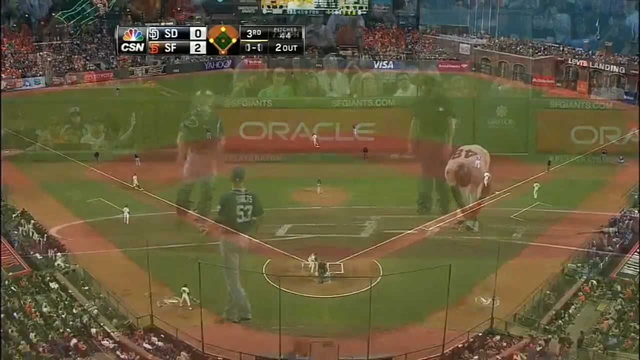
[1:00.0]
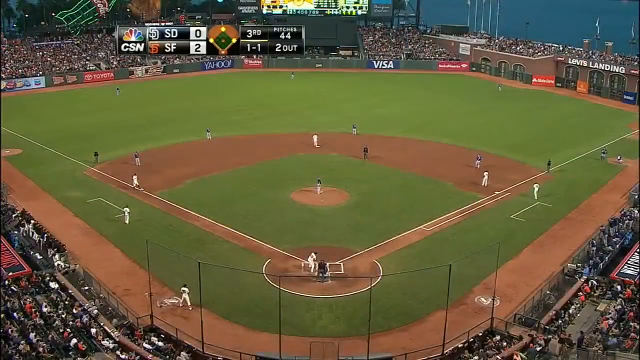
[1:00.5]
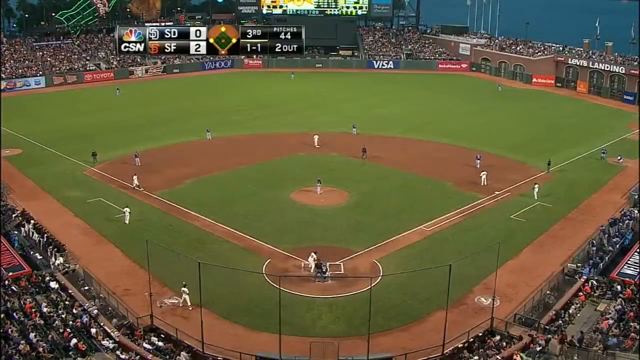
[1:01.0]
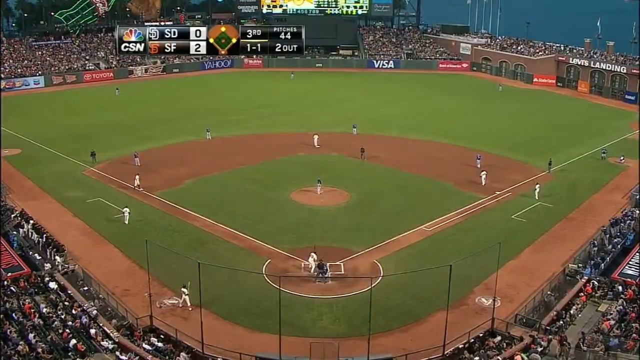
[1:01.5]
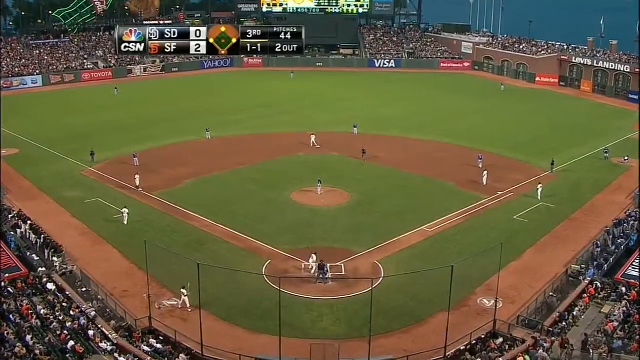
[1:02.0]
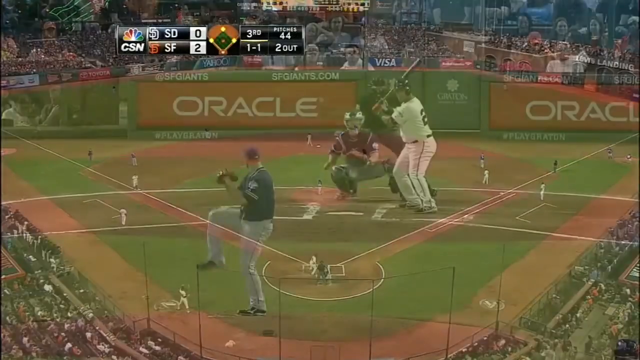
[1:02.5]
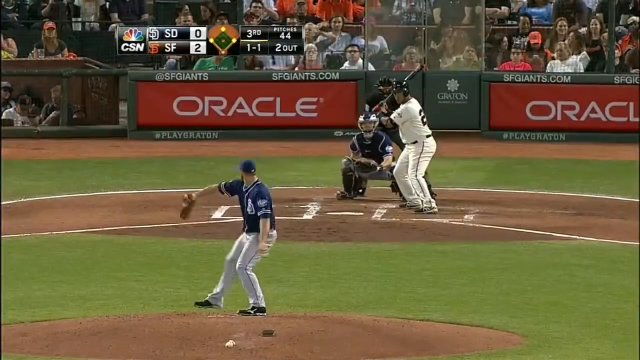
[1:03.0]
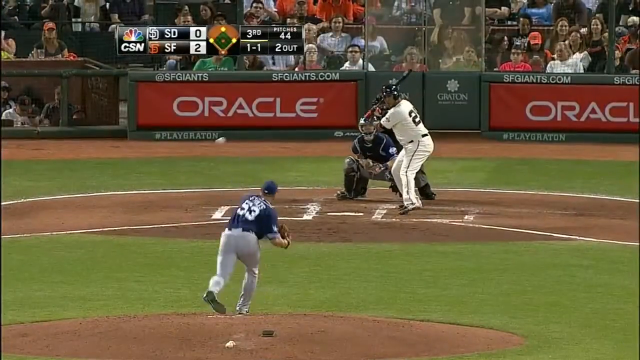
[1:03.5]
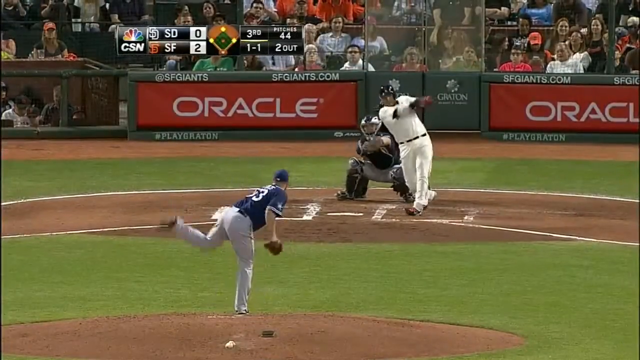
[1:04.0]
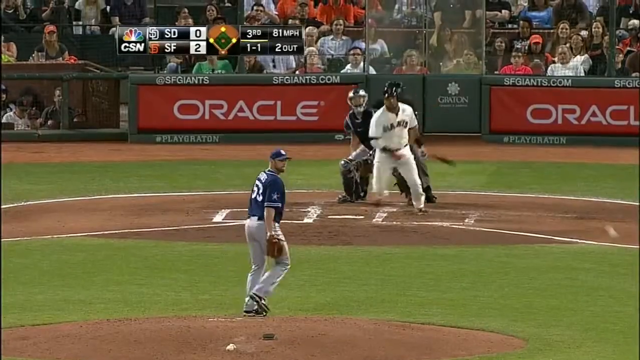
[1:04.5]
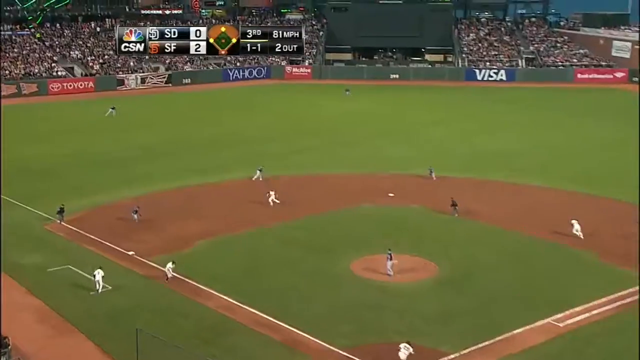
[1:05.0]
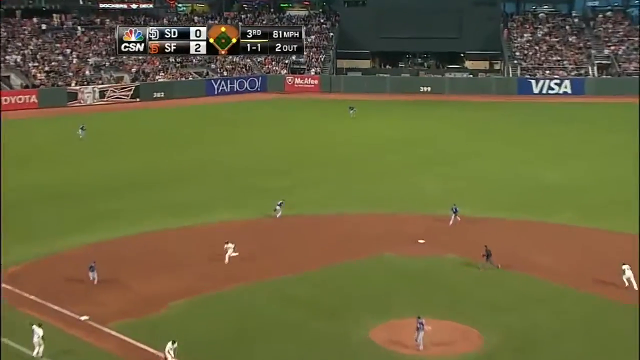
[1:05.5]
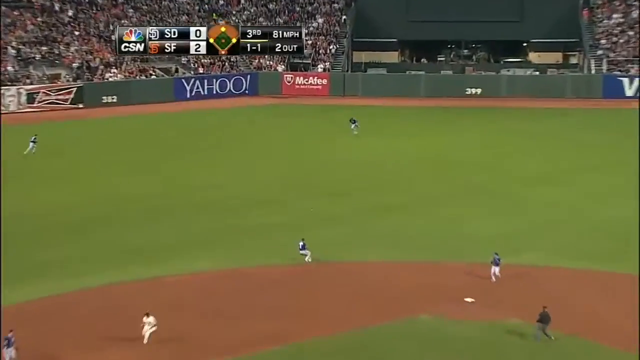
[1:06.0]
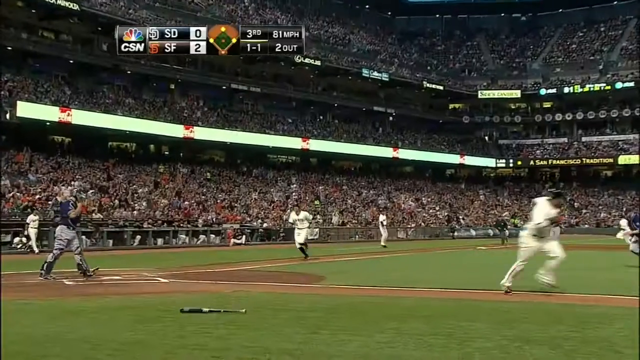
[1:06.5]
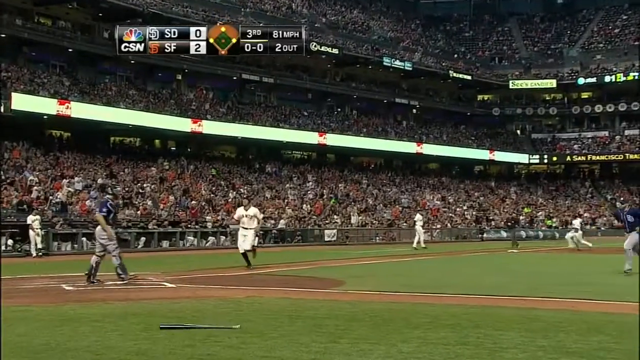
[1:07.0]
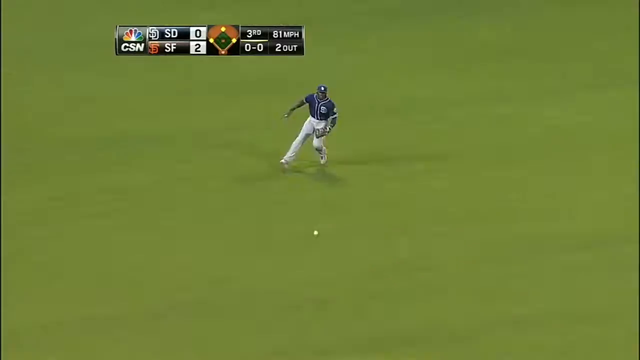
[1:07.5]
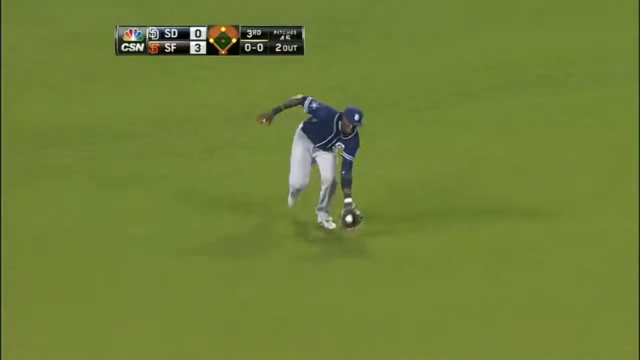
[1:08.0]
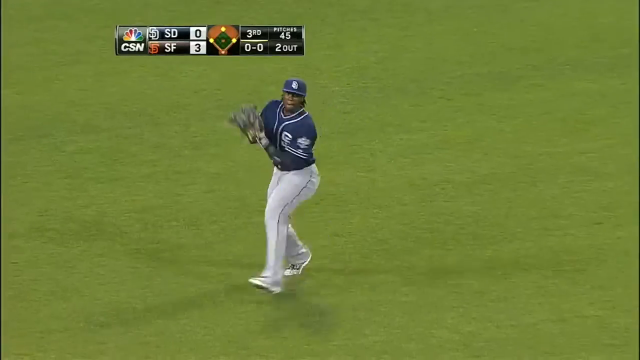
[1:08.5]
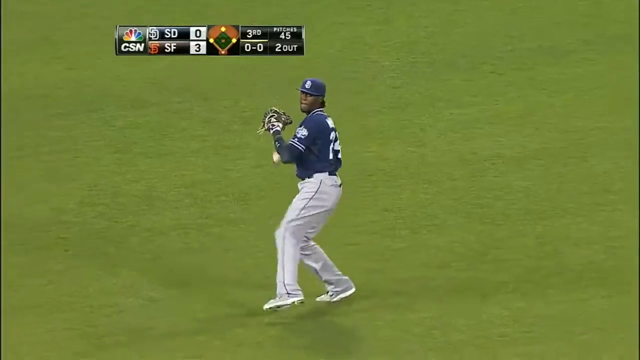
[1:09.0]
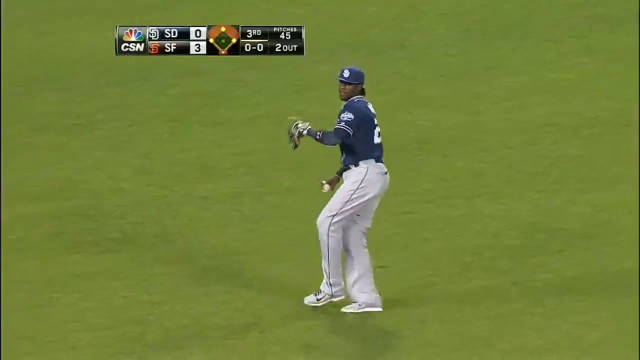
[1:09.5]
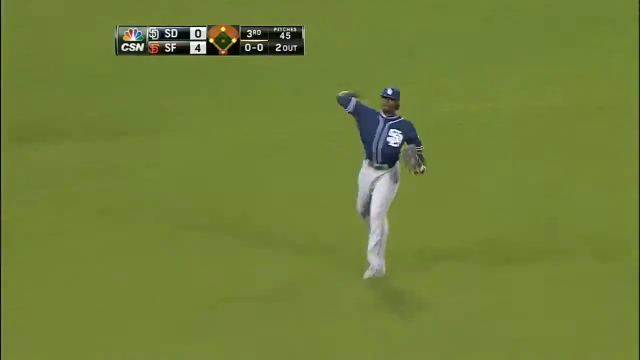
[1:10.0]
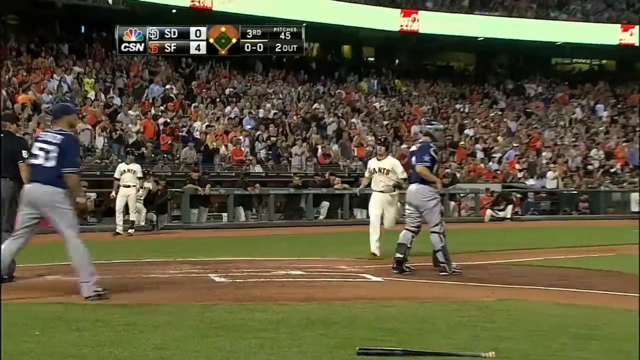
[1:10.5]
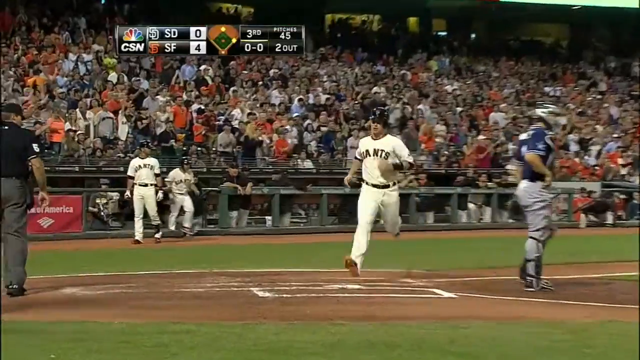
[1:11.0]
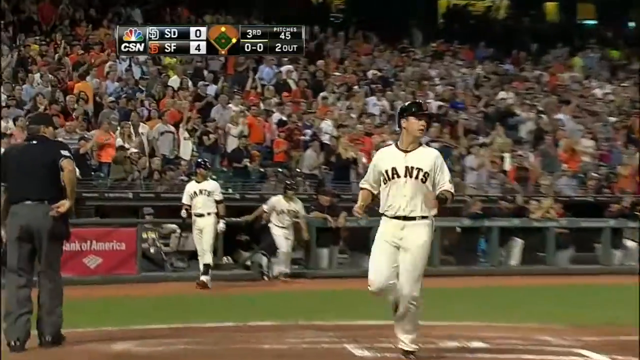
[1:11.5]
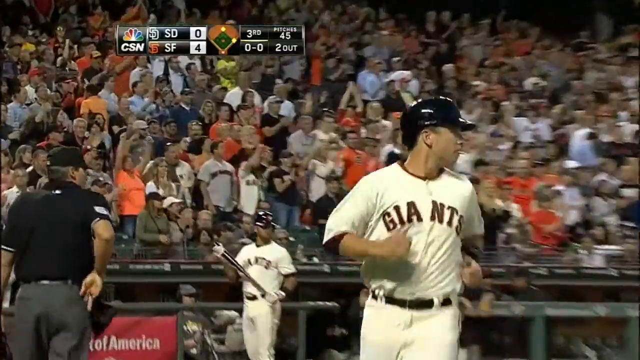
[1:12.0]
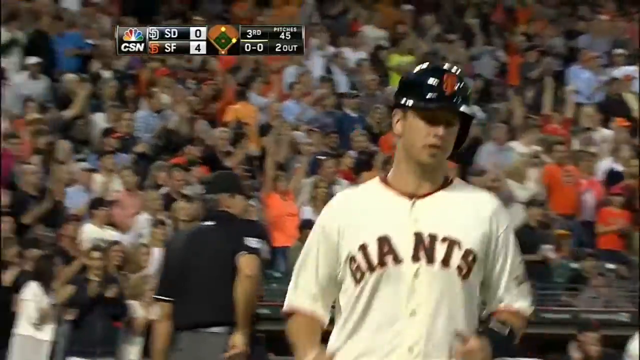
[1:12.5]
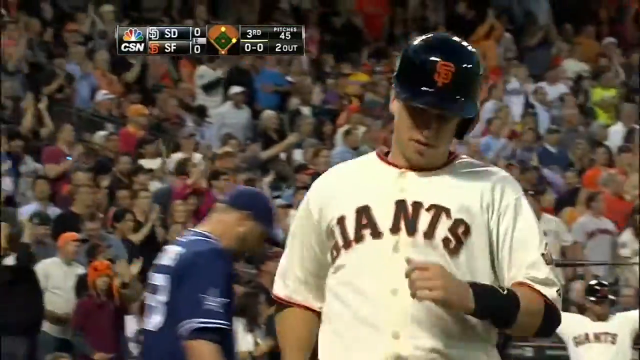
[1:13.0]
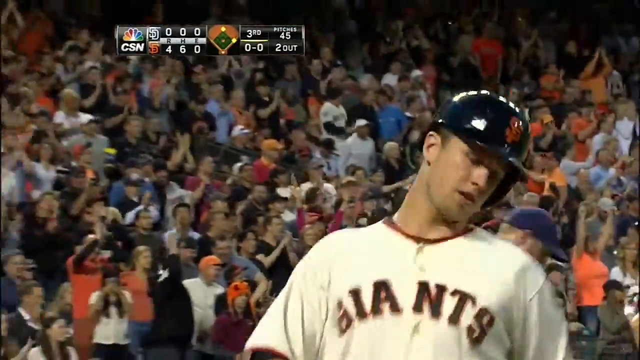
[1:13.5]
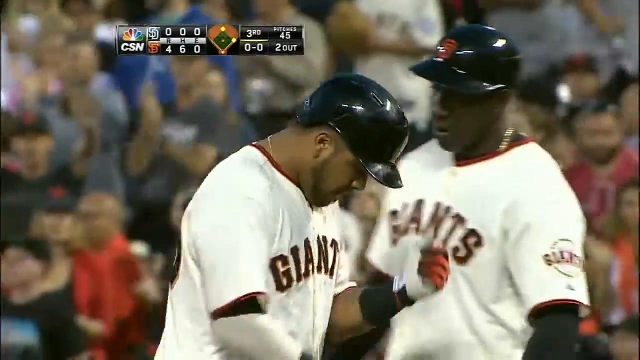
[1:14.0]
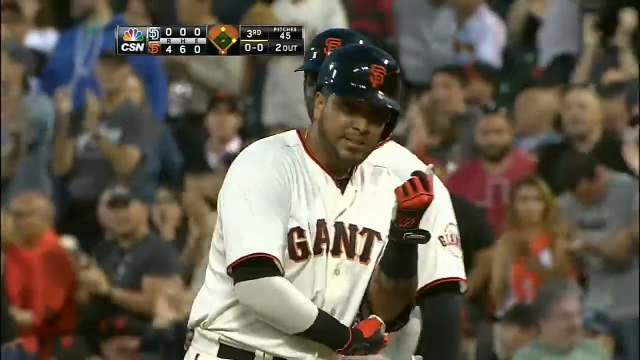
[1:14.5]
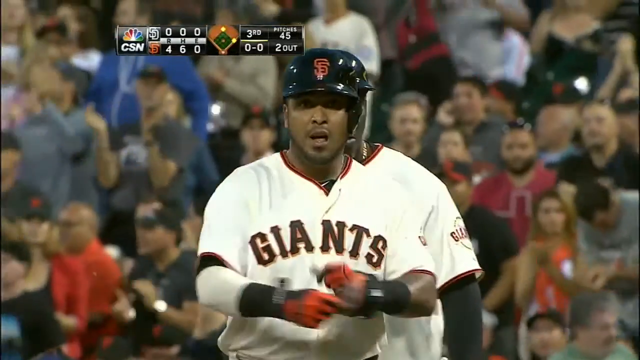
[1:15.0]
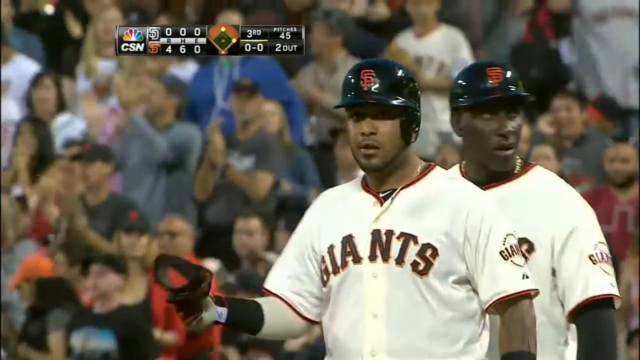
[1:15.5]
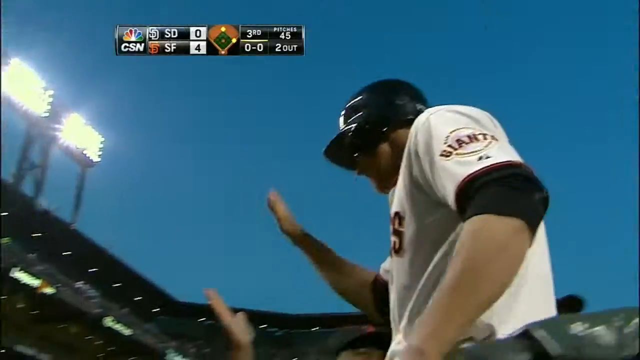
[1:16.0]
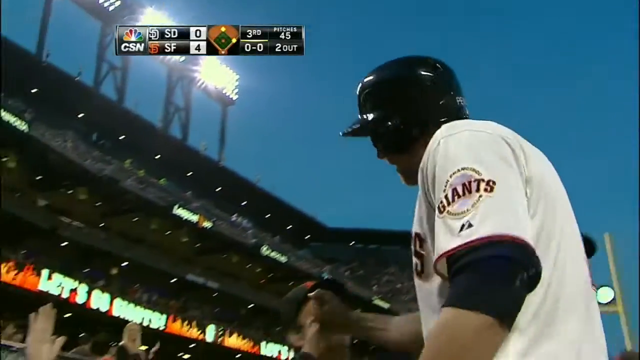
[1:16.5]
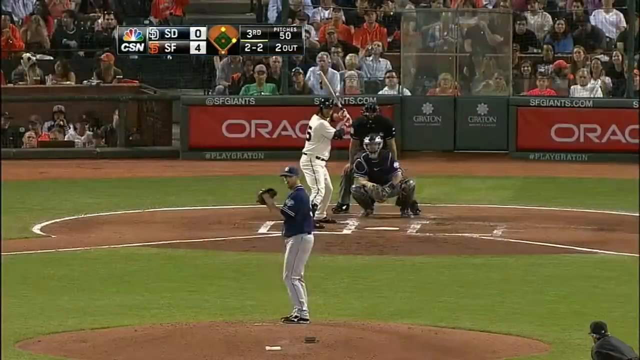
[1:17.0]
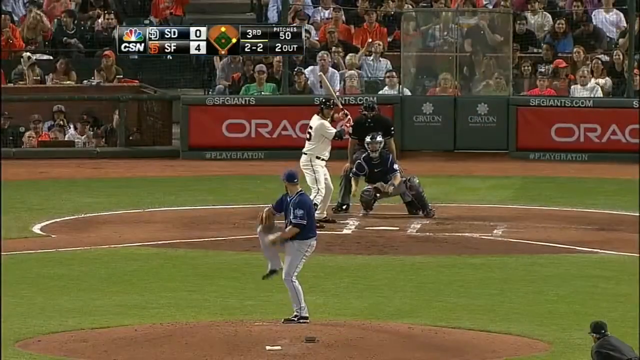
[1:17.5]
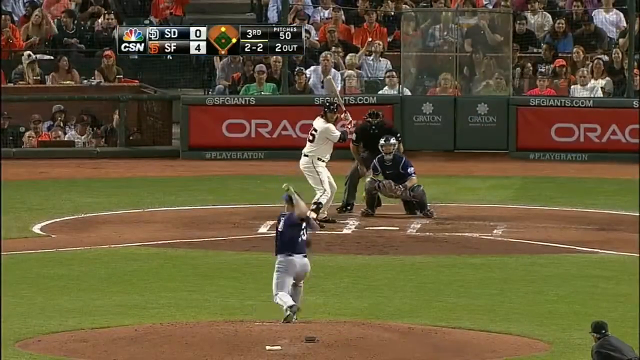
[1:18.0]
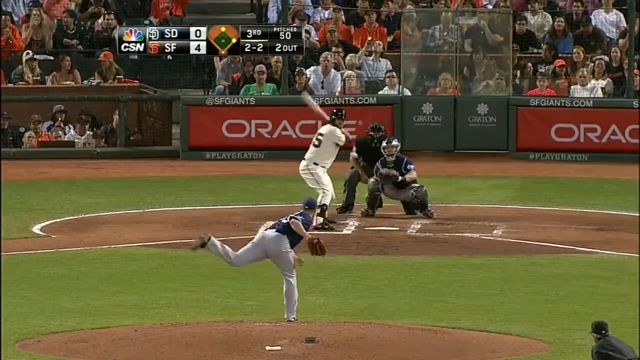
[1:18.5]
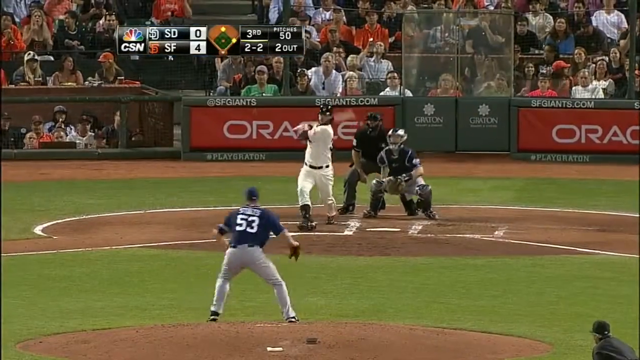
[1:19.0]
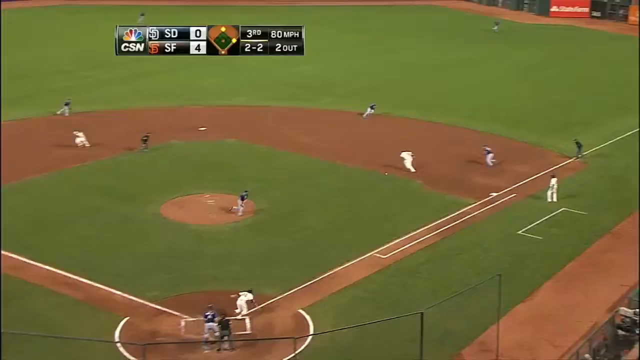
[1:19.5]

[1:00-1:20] In the bottom of the third inning, with the Giants at home, there are two outs and the bases are loaded after 44 pitches. A left-handed pitcher faces a right-handed hitter with a count of one ball, one strike. The pitcher winds up and the batter hits one right up the middle, scoring two runs to make it 4-0 San Francisco. Next, a left-handed pitcher faces a left-handed batter; the pitch count is 50, the score 4-0, with two outs, two balls, two strikes, and two men on. This batter hits the ball right between the shortstop and the first baseman.